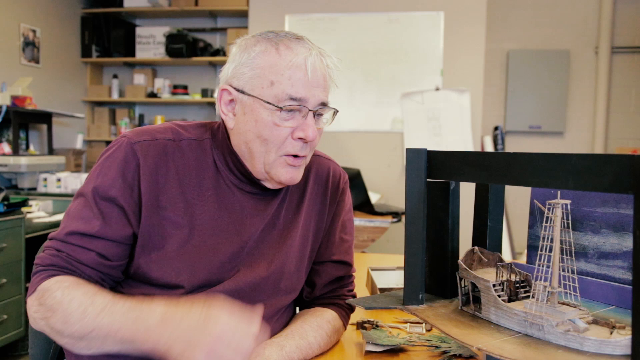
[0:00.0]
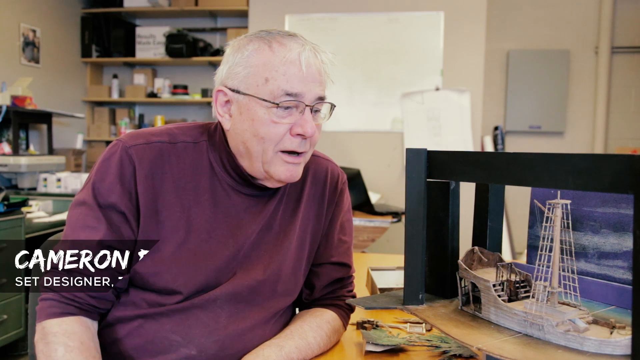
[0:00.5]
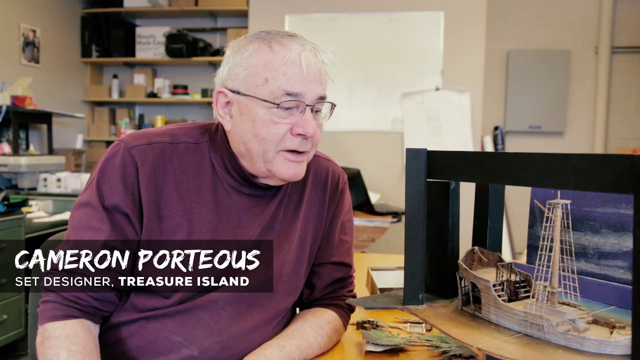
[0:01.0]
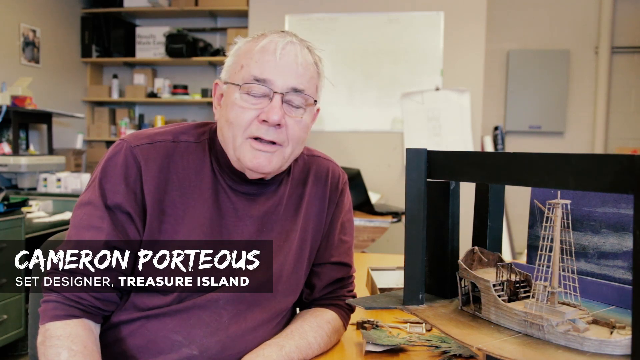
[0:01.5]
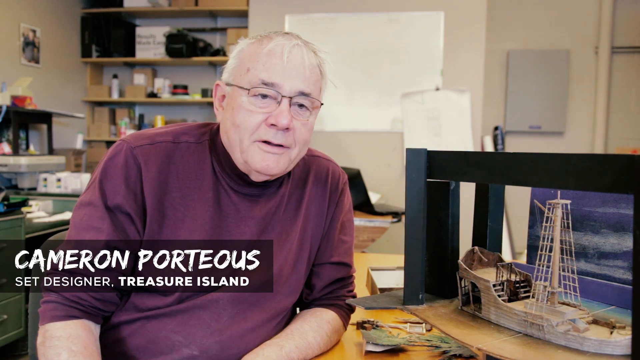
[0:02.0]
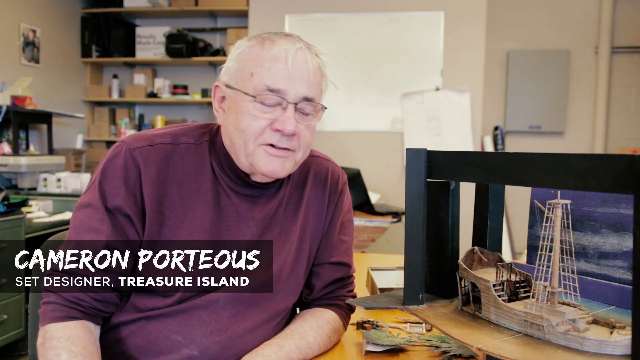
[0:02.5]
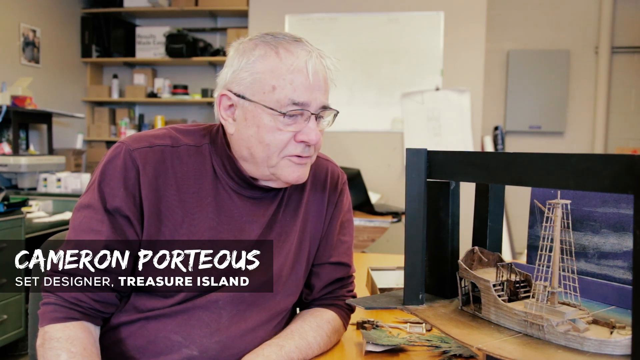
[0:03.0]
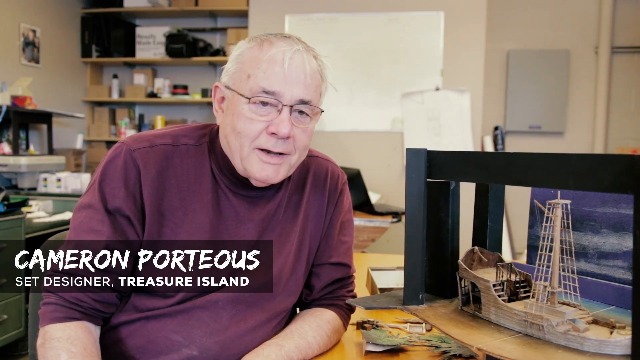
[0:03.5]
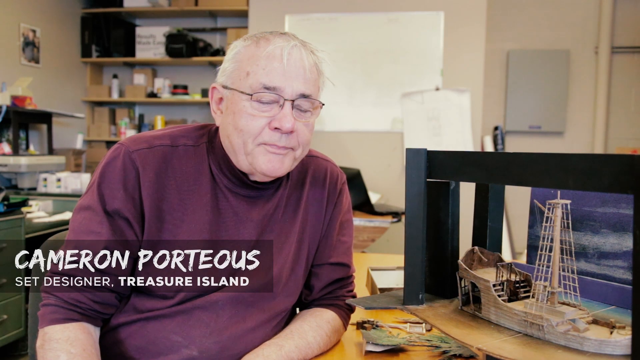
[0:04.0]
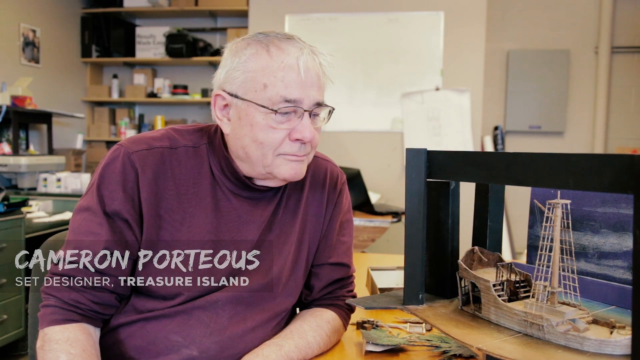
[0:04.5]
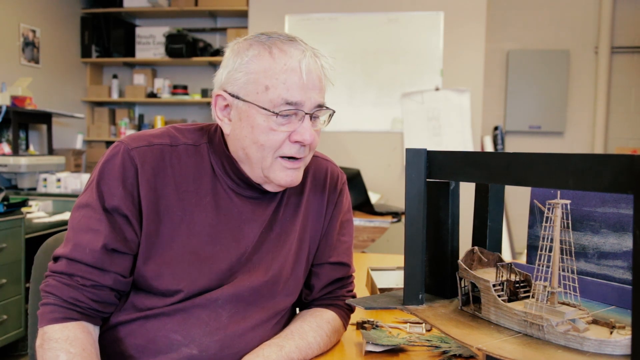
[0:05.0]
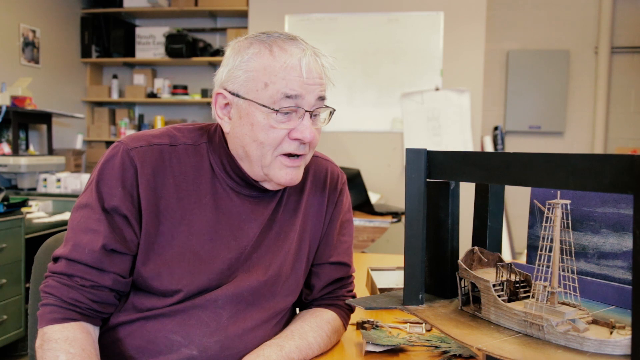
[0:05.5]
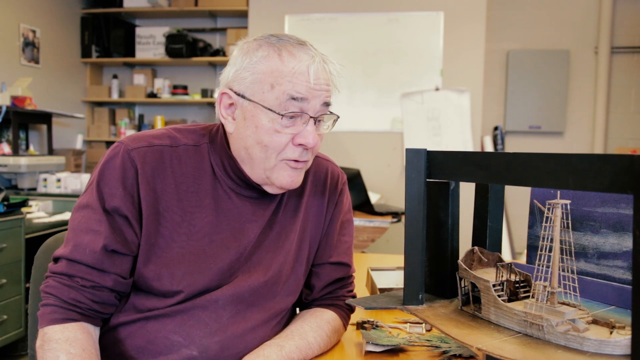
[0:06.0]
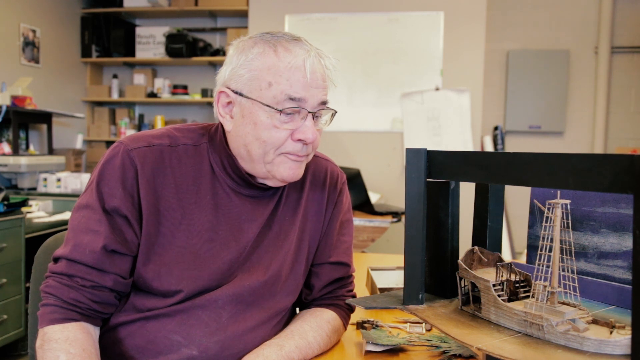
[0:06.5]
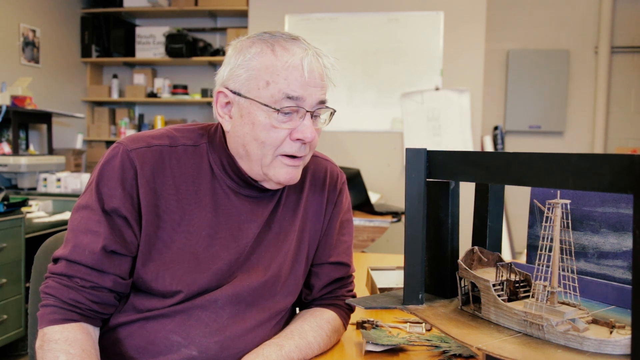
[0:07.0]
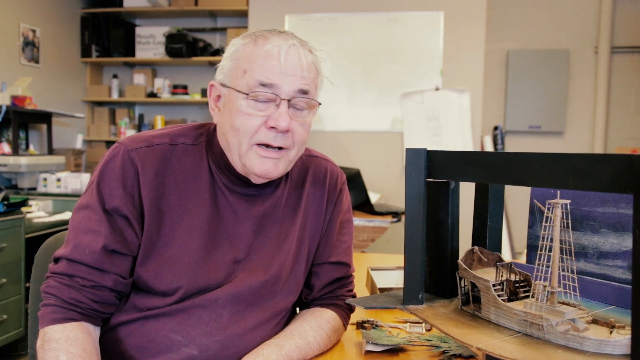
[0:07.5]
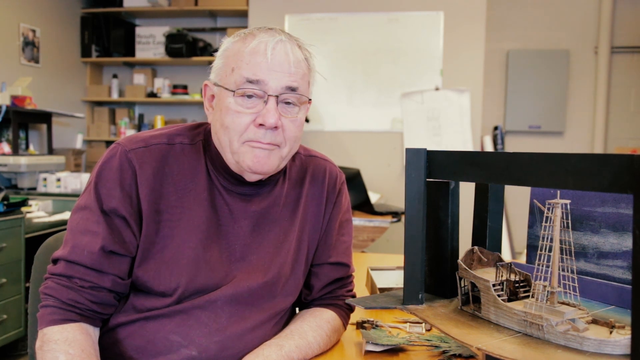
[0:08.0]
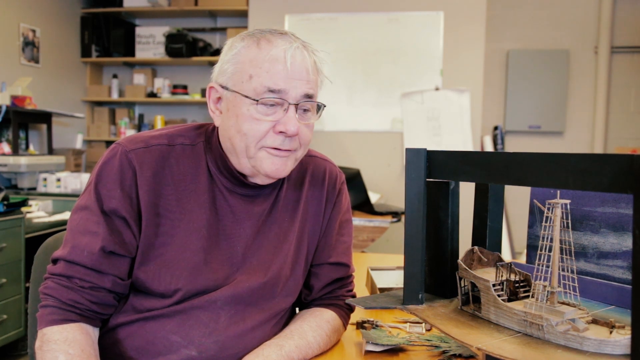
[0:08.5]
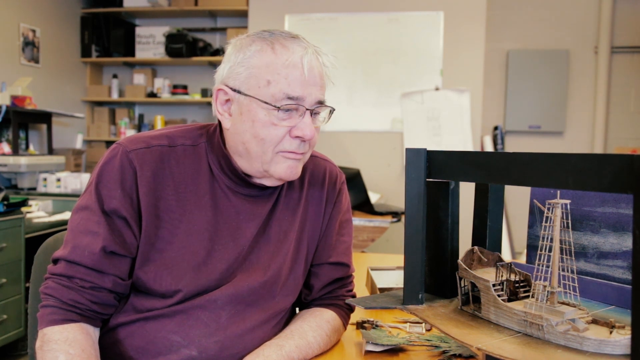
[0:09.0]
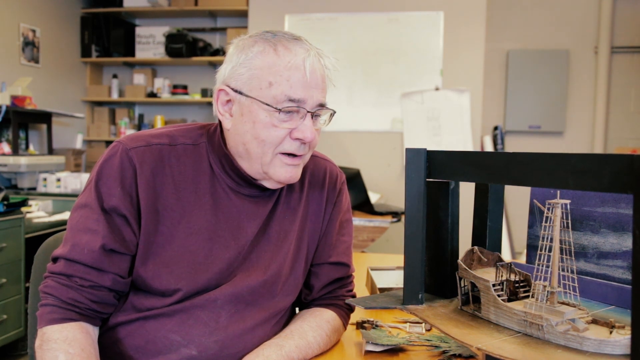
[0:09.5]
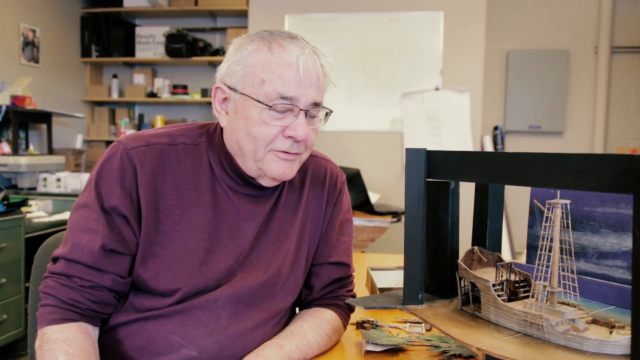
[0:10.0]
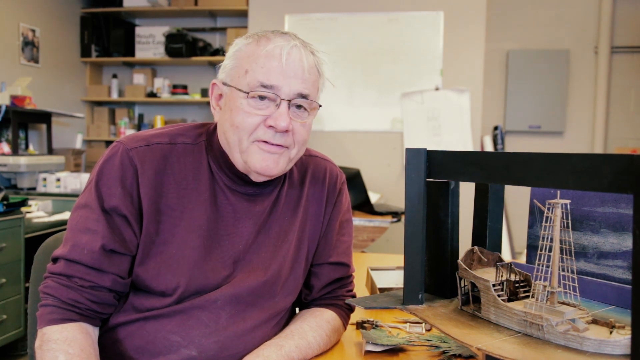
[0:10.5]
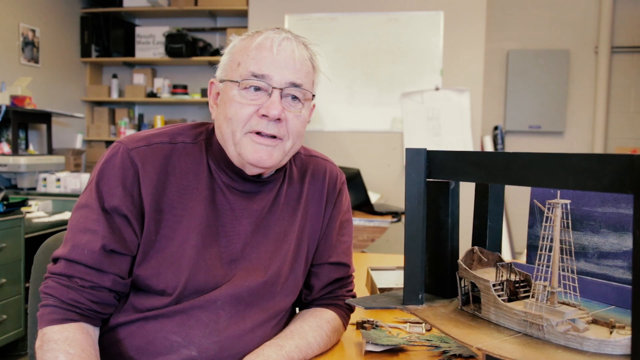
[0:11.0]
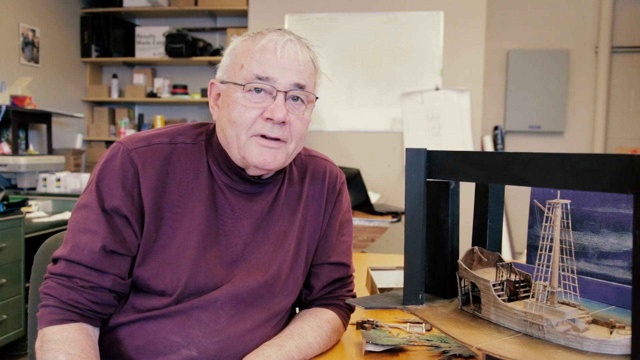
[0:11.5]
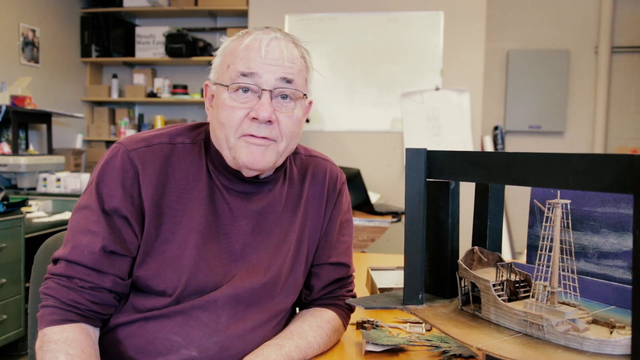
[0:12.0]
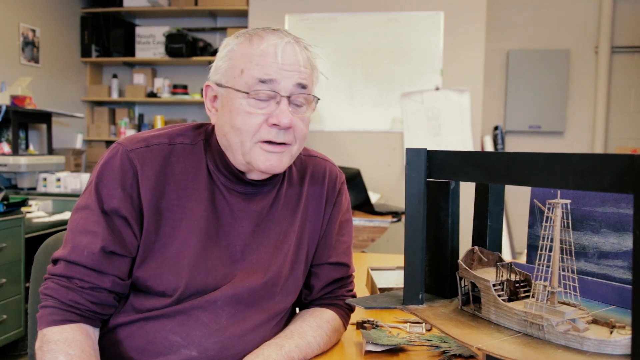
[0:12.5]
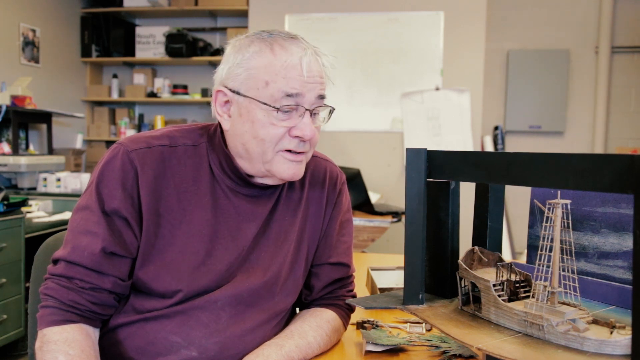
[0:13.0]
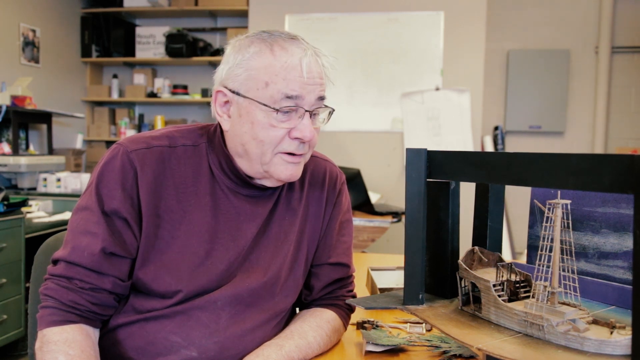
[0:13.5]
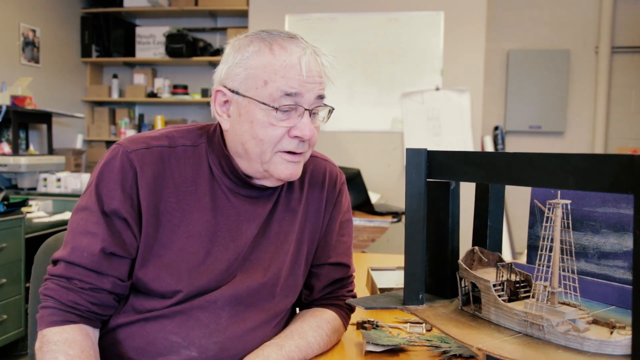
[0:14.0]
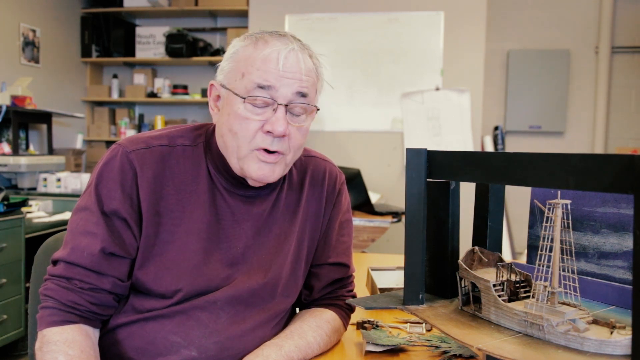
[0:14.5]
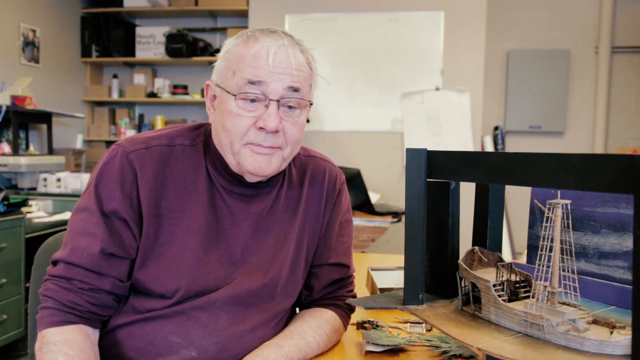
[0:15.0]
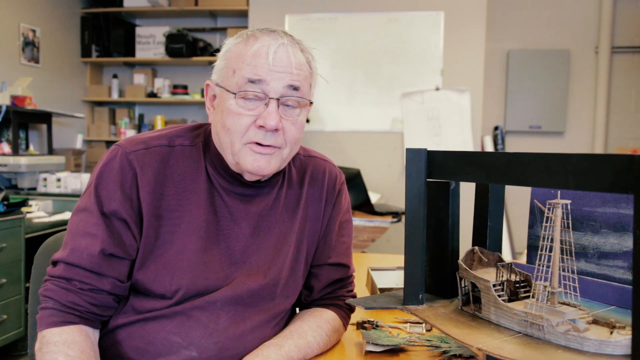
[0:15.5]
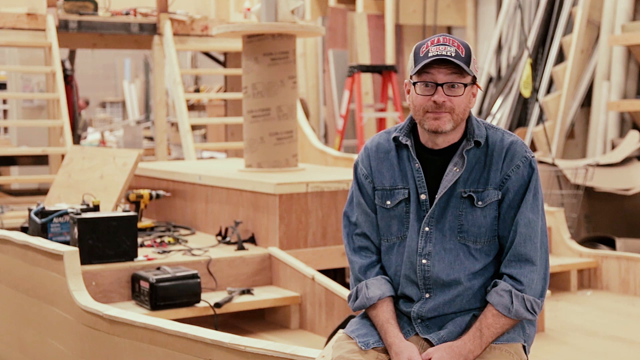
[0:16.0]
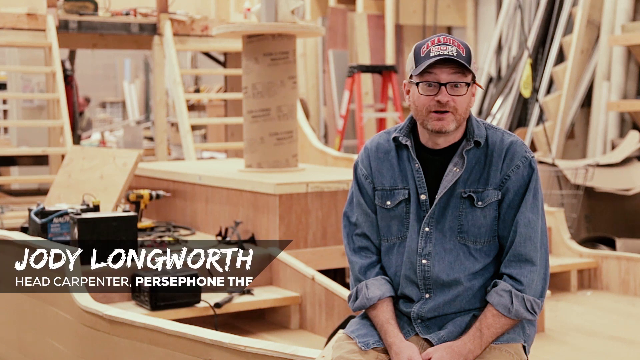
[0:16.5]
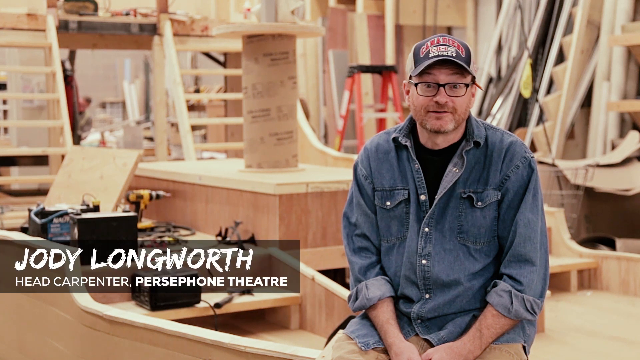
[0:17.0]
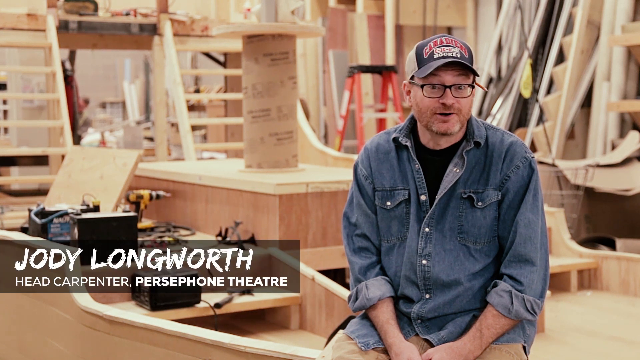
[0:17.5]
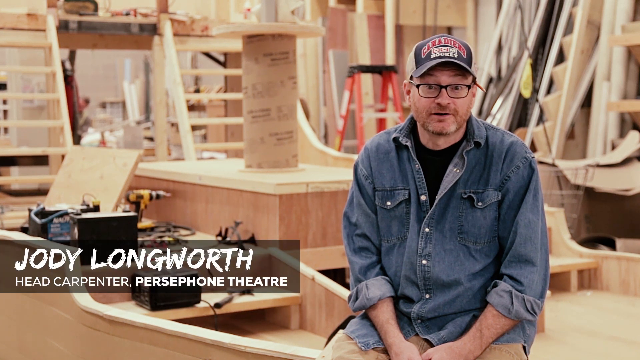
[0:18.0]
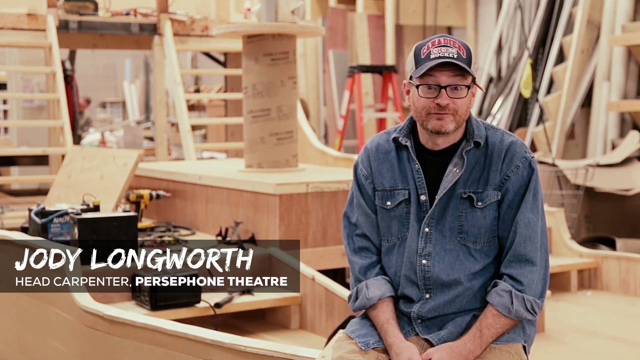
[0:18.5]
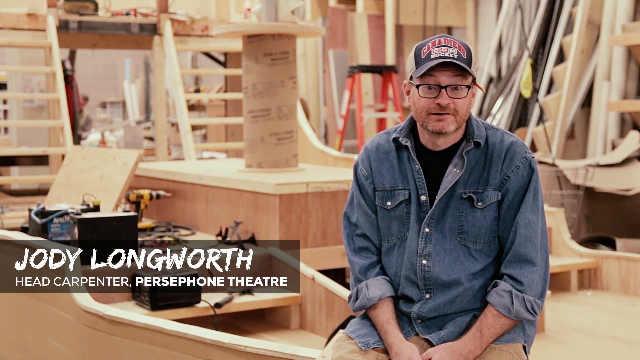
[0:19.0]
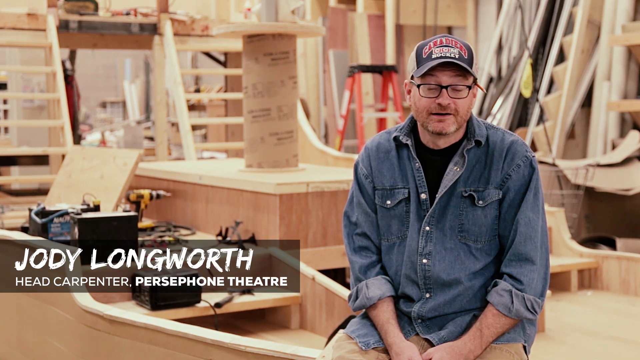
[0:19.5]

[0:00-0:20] A white man with blonde hair and glasses is shown talking. The background consists of cardboard and a white board next to the man, and there is a built ship. He seems to be doing an interview. Someone young wearing a skirt, a t-shirt and a denim jacket is also shown.